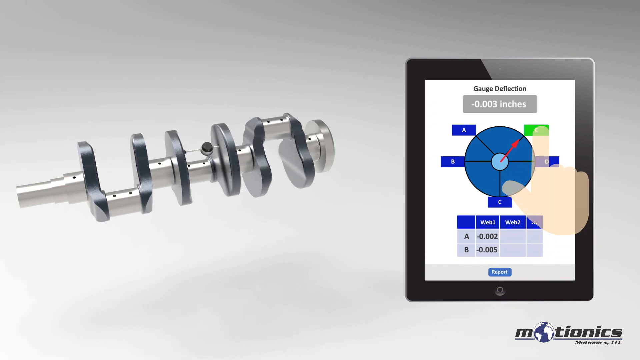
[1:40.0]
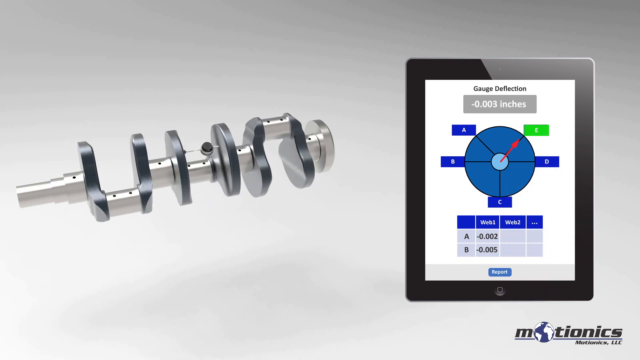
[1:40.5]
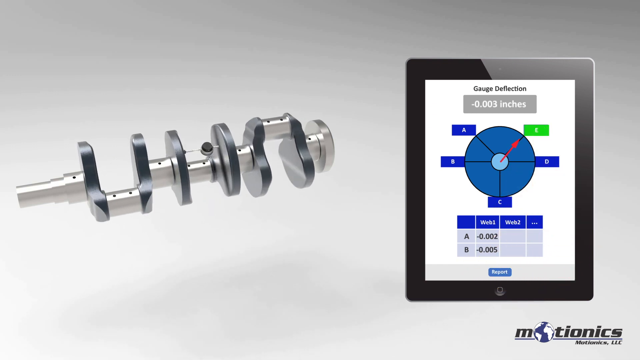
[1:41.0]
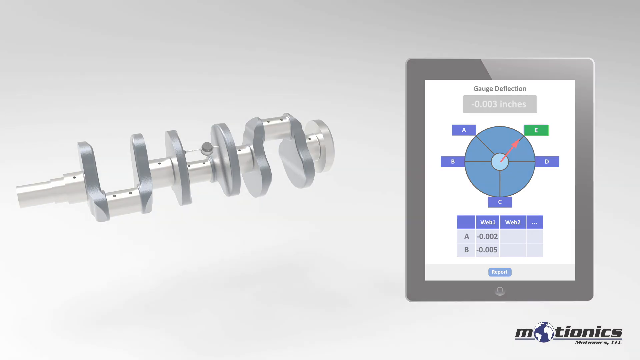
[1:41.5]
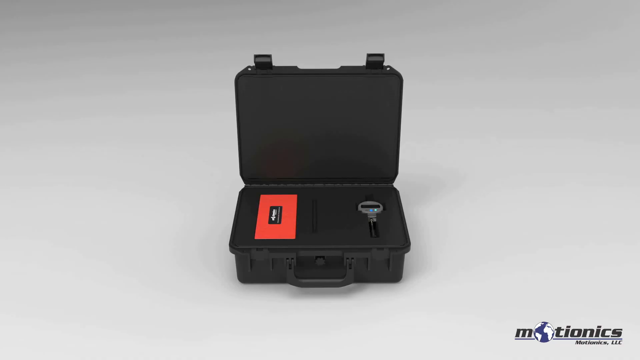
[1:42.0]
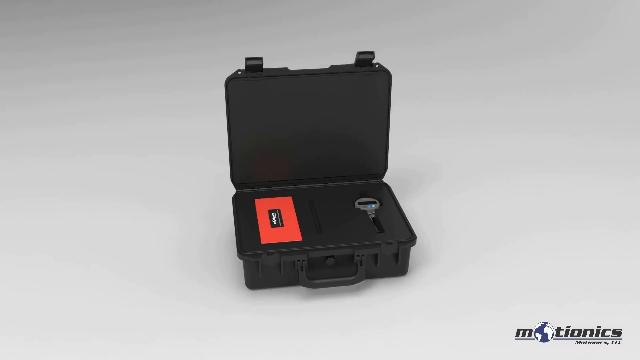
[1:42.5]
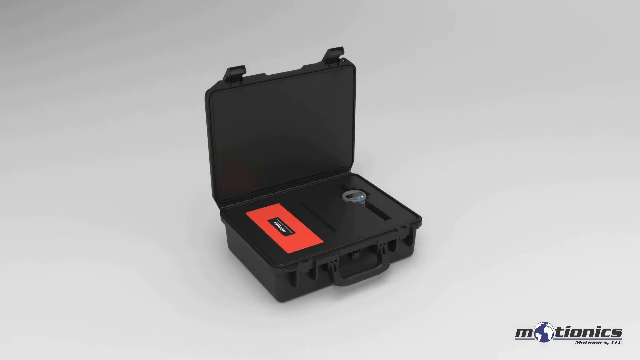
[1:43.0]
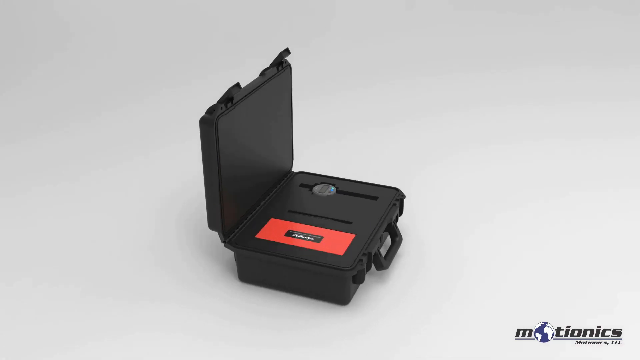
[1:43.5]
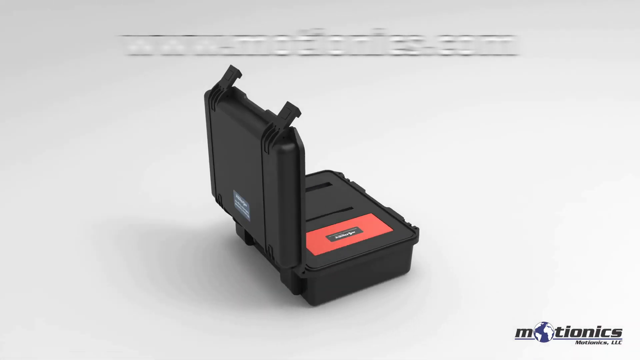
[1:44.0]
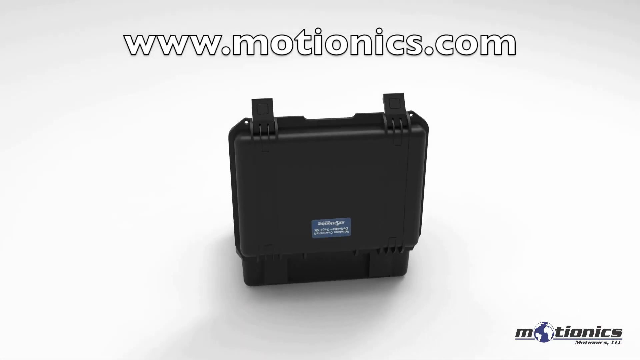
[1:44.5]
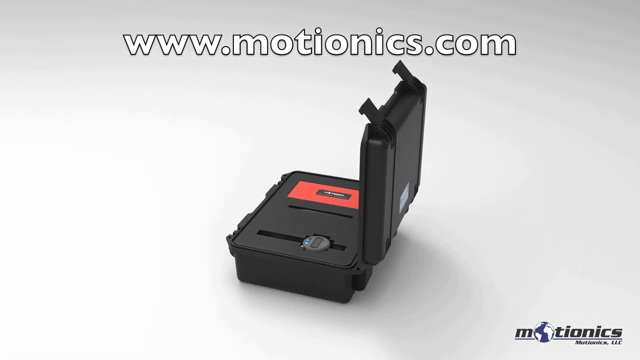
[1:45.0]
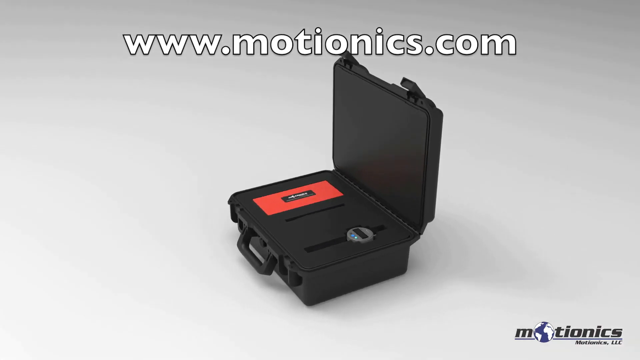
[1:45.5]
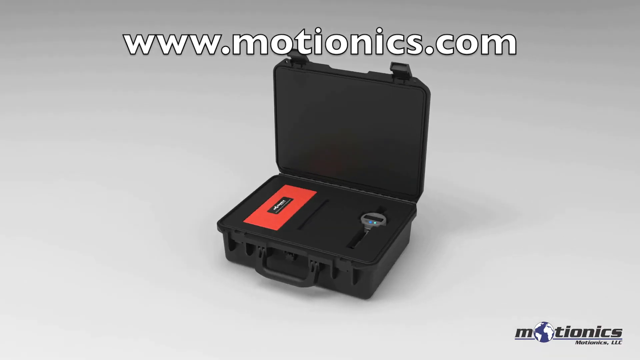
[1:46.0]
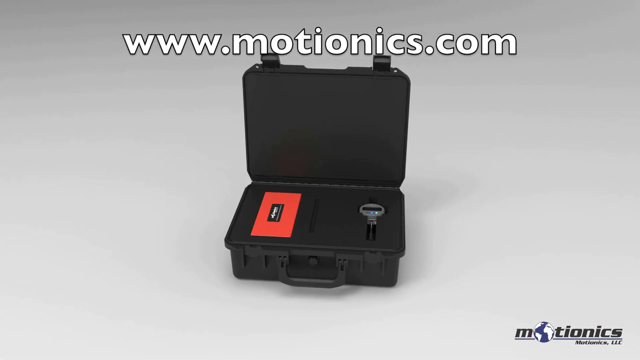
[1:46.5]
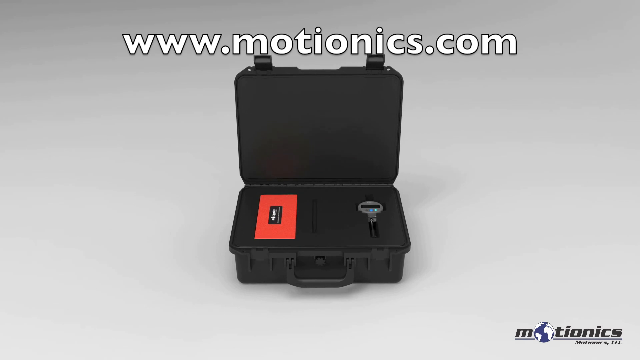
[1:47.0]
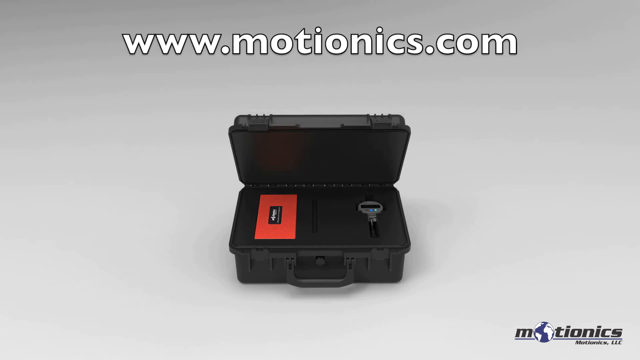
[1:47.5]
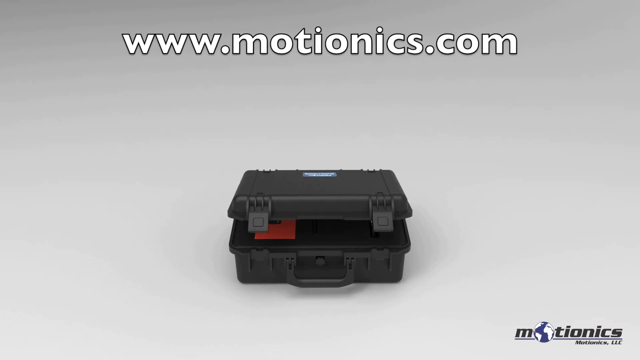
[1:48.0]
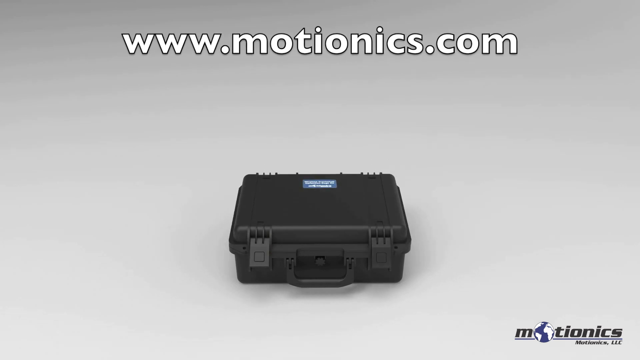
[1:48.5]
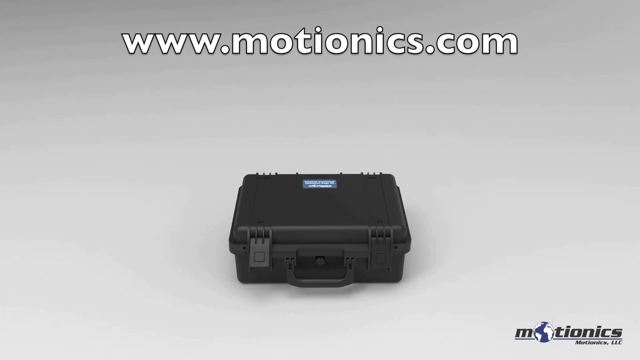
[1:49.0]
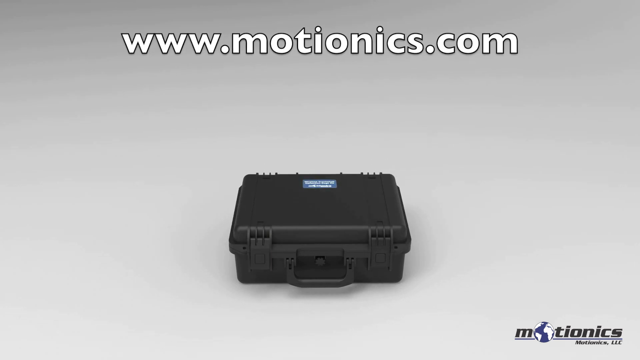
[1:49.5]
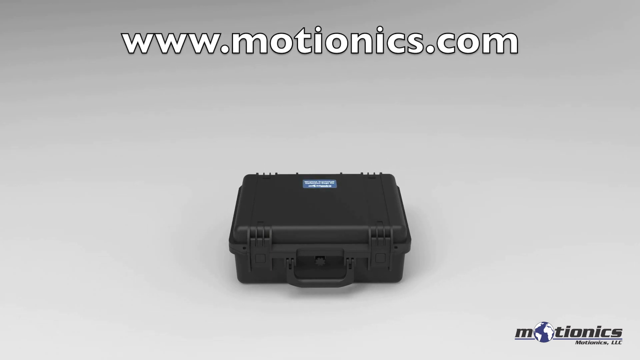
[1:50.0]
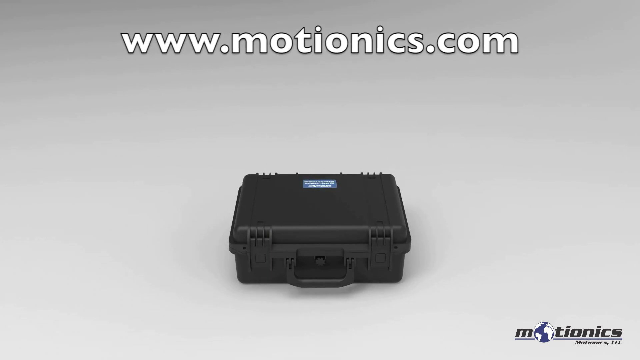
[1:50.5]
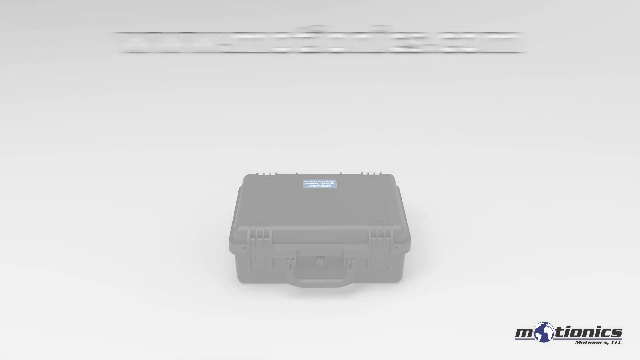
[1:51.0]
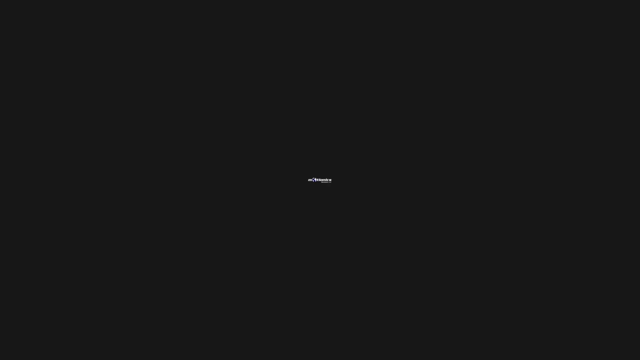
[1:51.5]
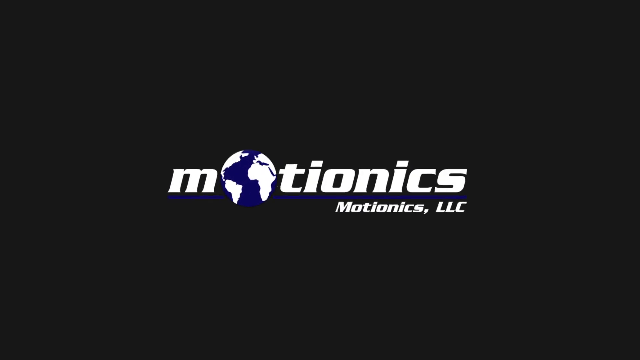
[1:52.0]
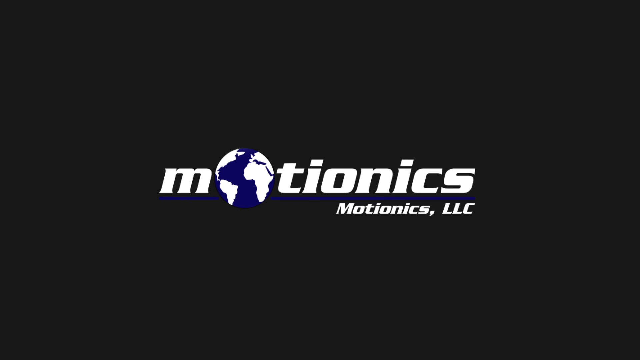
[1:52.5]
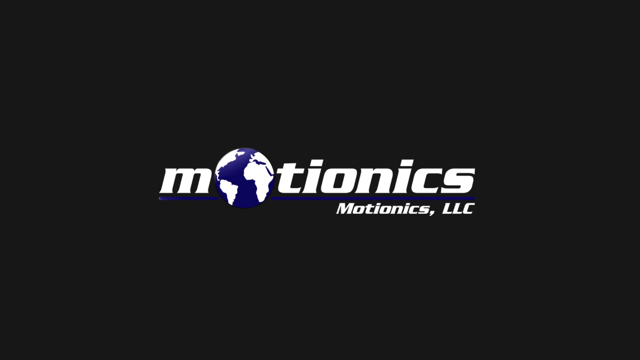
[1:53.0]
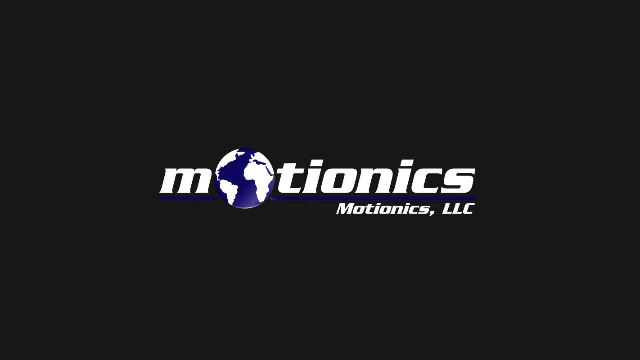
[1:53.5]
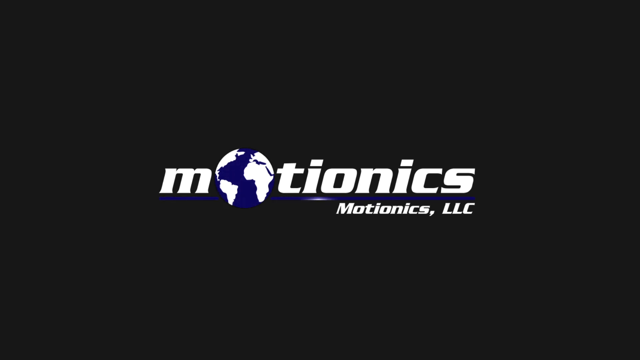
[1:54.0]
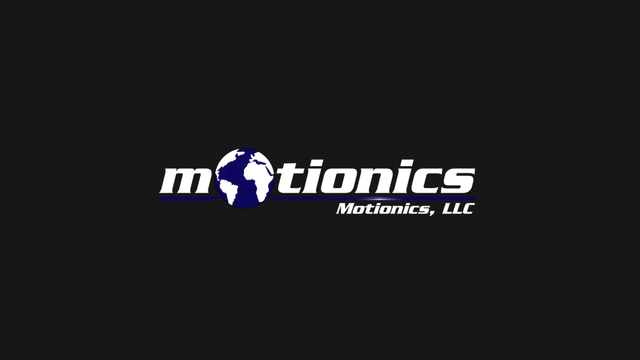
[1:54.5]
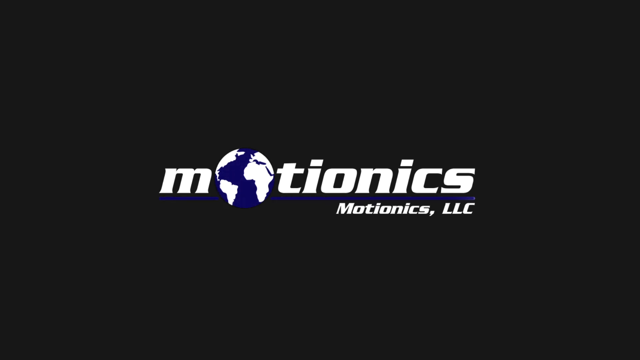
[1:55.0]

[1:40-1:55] The cartoon hand fades off the screen. The picture changes to the open box with the red rectangle on the left and the circular device on the right. The box spins as if the camera is moving to the left, turning 360 degrees right to left and back to where it was, while white lettering on top reads "www.motrionics.com". The box lid closes without anything touching it, and once it covers the contents, the two latches close, first the right and then the left. The screen fades briefly to white, then black, and then "Motionics" grows from the middle in white lettering, with a globe as the O showing white continents and blue water; below it on the right is "Motionics LLC". A slight purple highlight moves from left to right across the lettering of the logo.